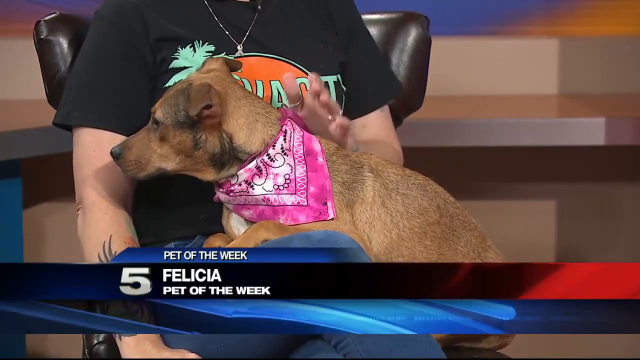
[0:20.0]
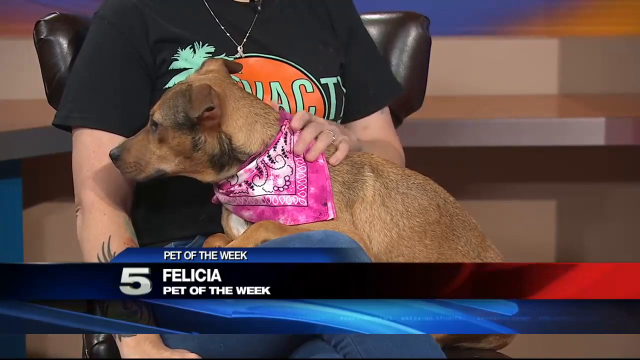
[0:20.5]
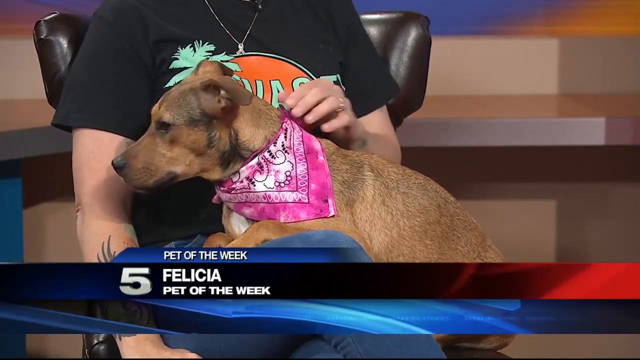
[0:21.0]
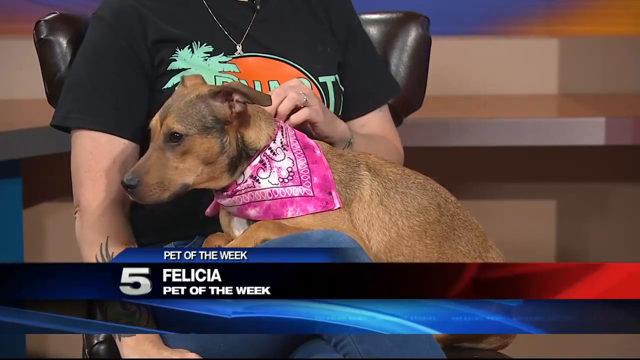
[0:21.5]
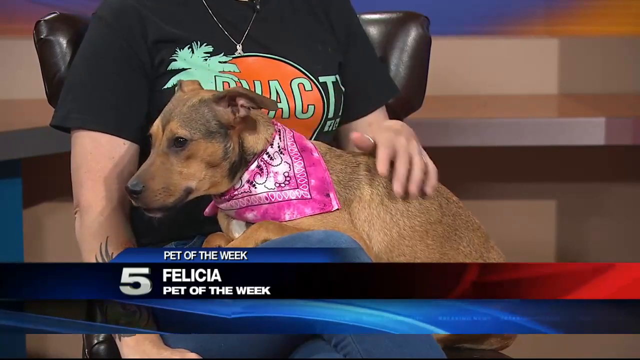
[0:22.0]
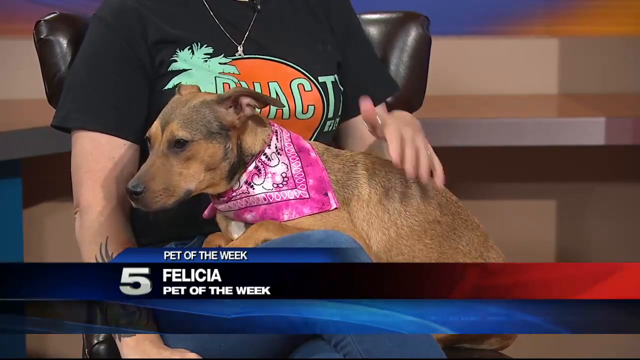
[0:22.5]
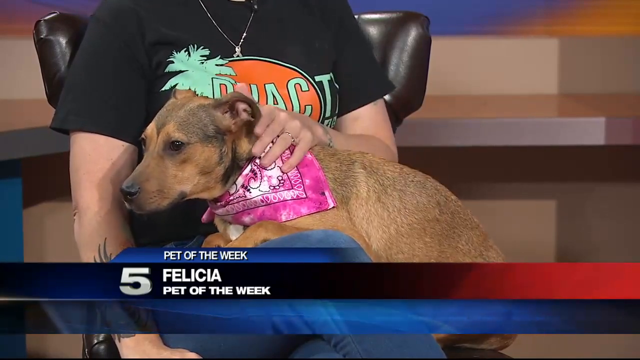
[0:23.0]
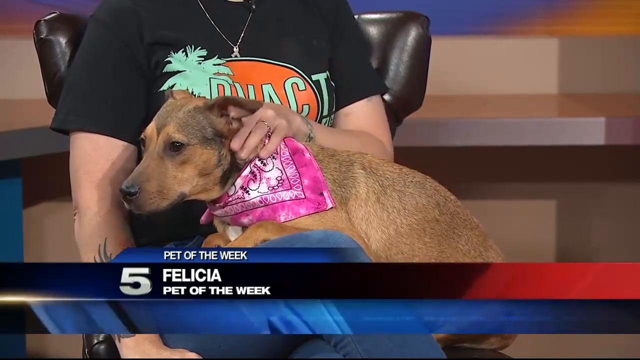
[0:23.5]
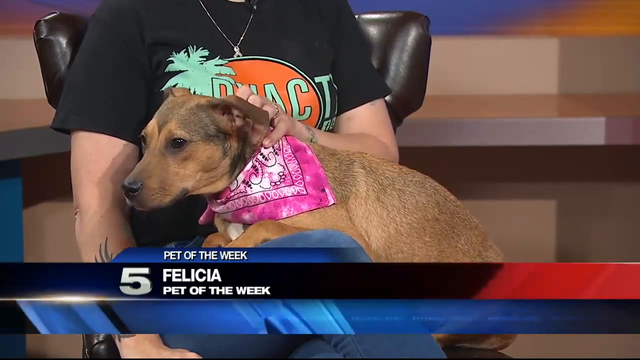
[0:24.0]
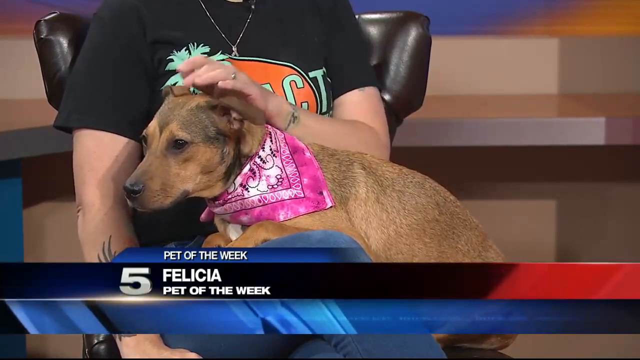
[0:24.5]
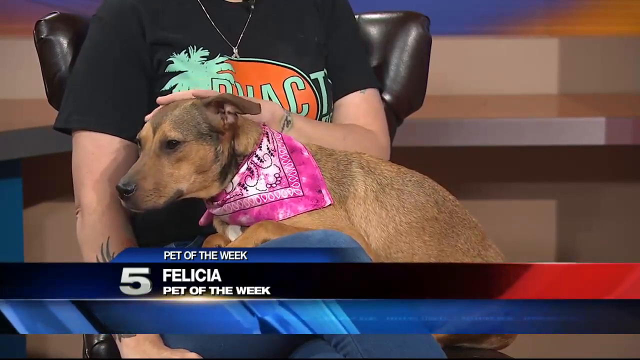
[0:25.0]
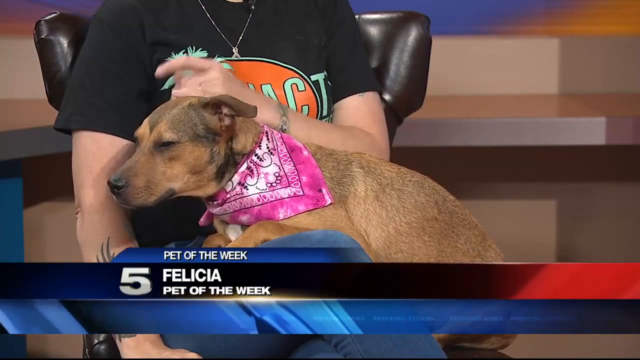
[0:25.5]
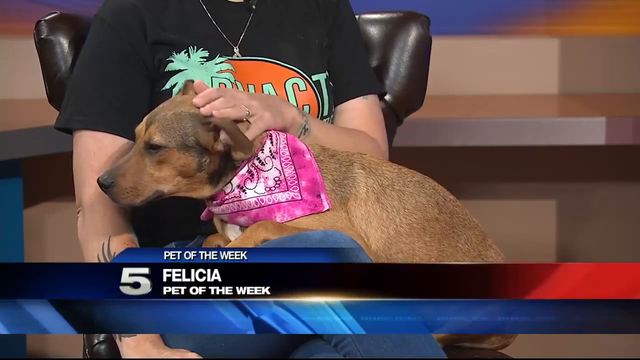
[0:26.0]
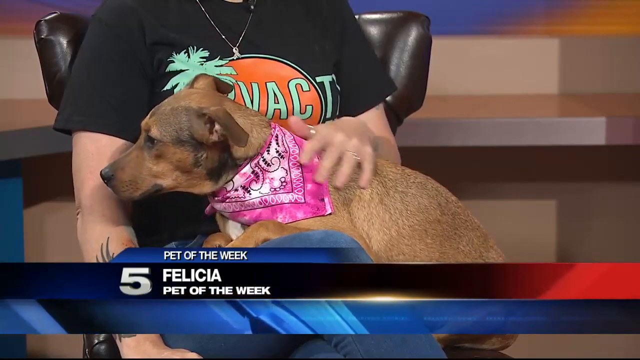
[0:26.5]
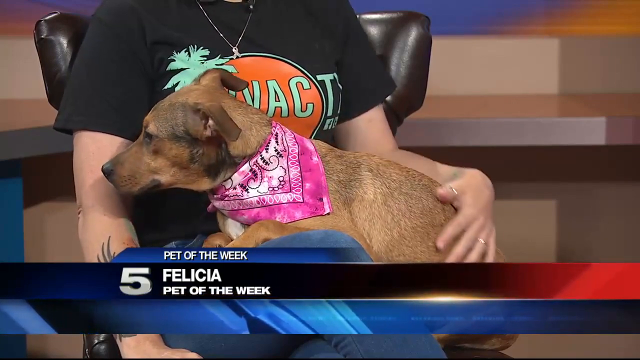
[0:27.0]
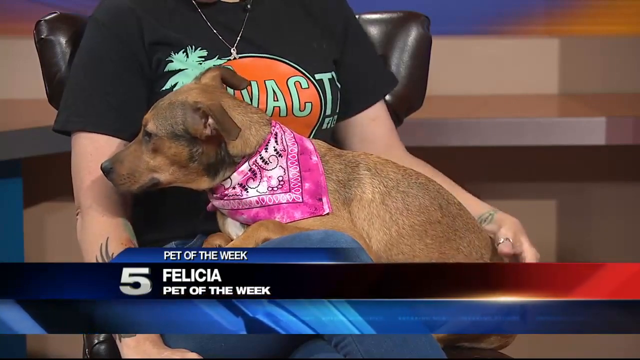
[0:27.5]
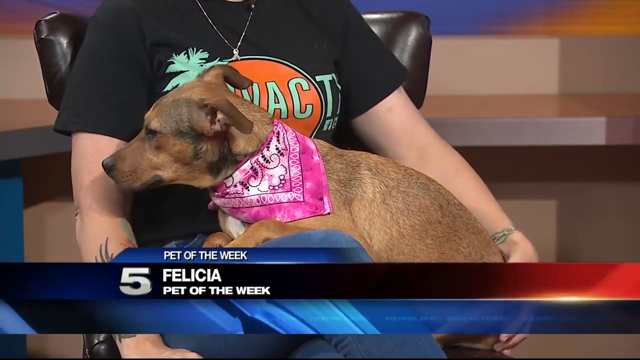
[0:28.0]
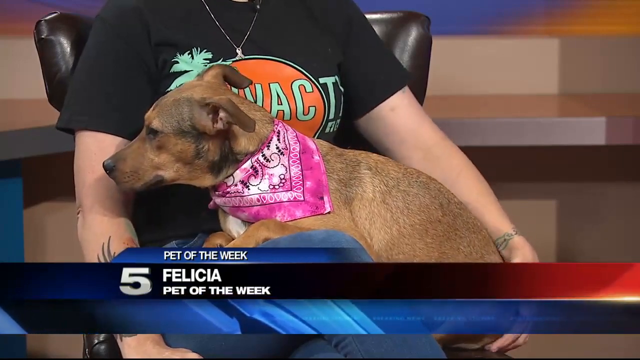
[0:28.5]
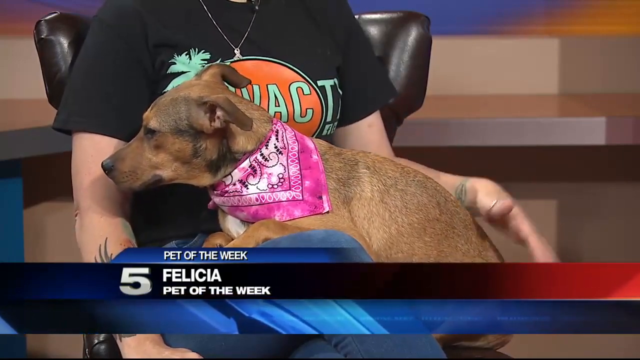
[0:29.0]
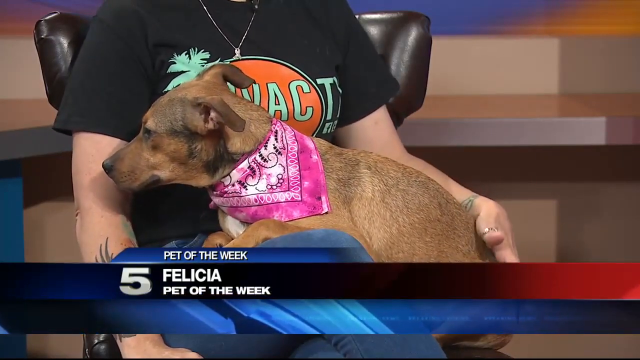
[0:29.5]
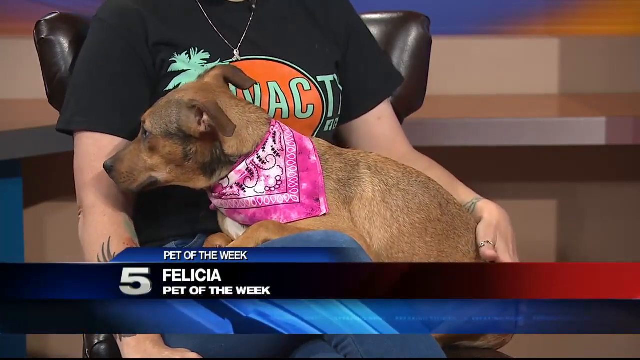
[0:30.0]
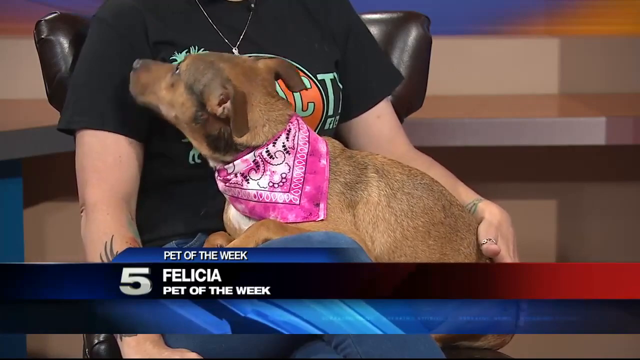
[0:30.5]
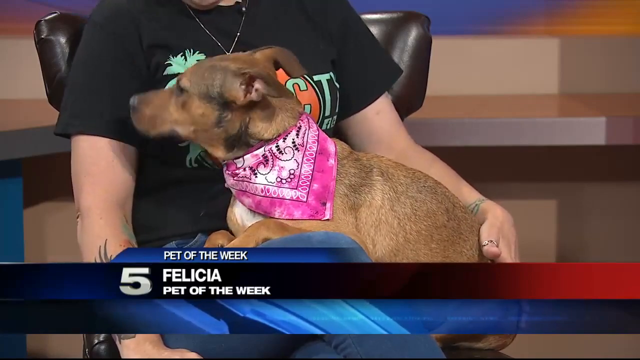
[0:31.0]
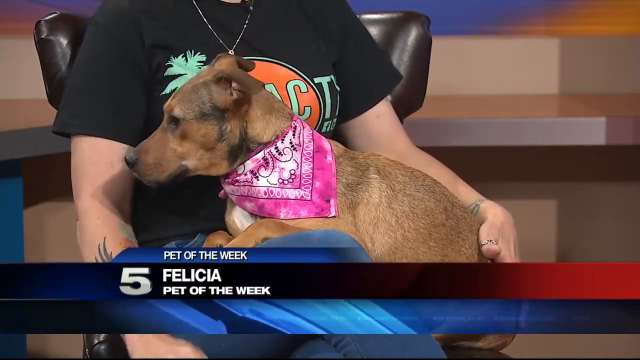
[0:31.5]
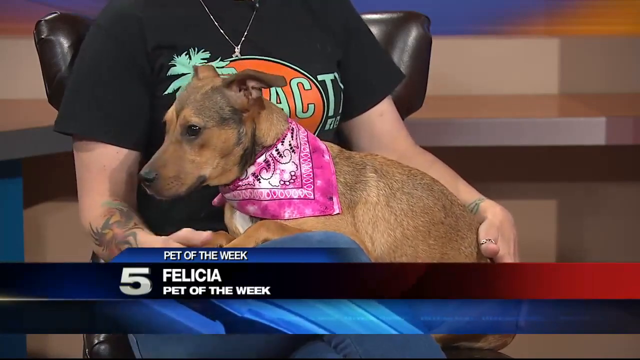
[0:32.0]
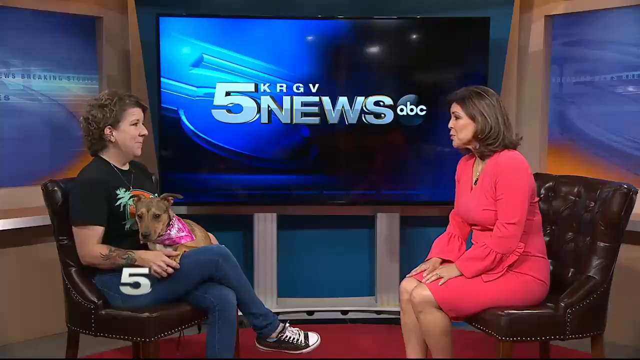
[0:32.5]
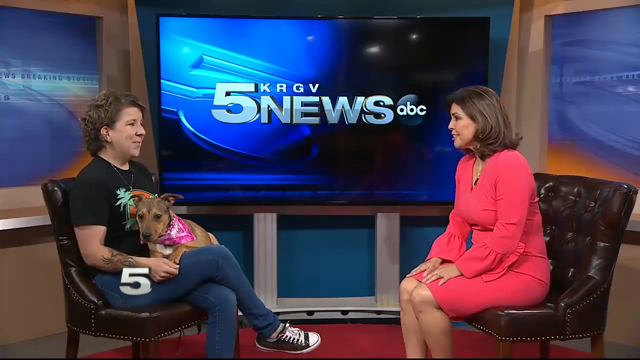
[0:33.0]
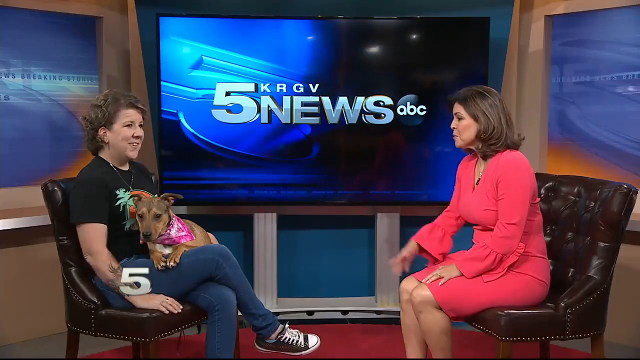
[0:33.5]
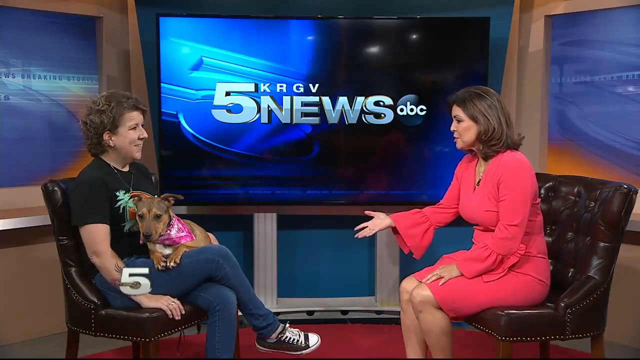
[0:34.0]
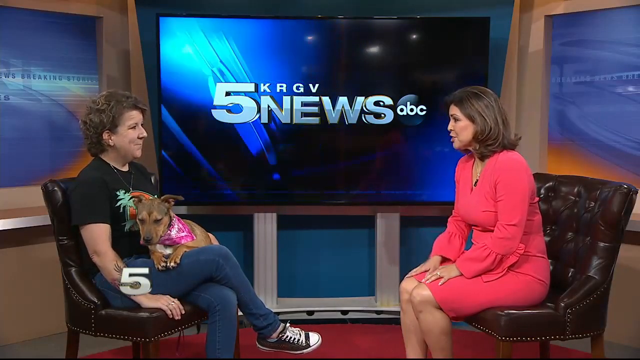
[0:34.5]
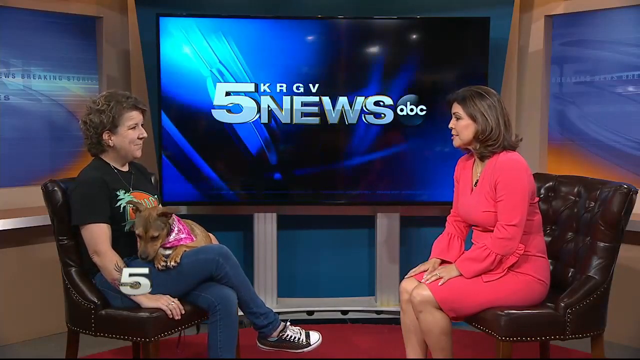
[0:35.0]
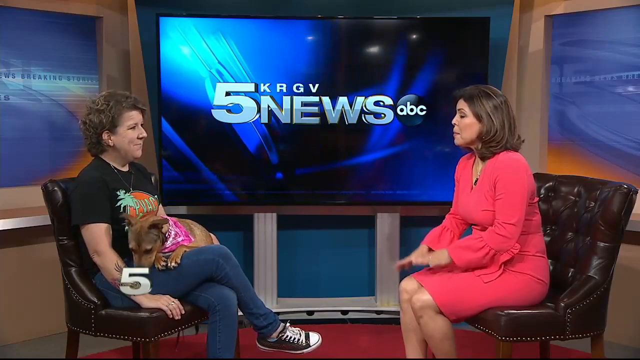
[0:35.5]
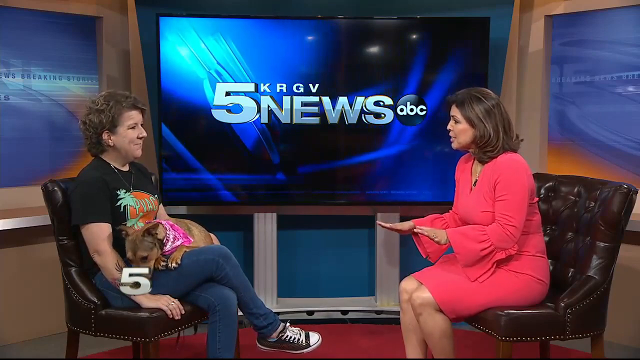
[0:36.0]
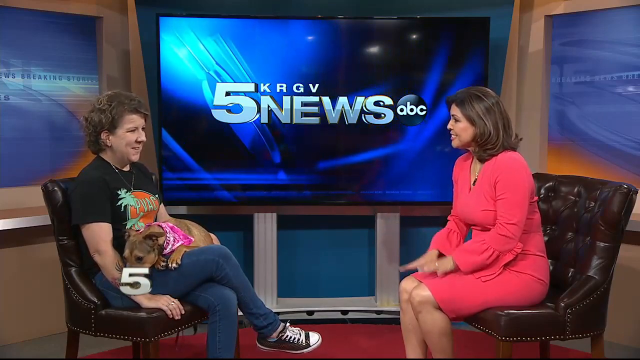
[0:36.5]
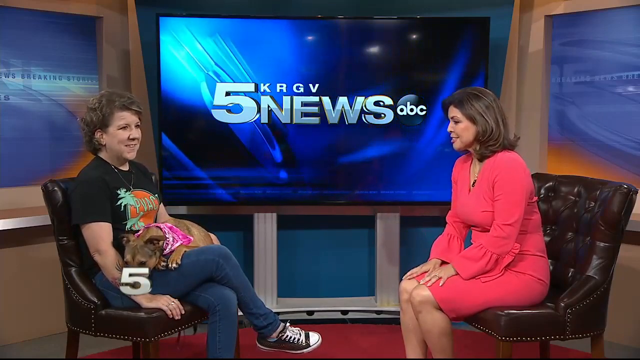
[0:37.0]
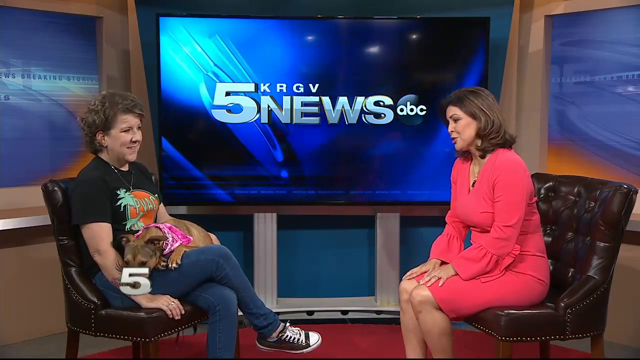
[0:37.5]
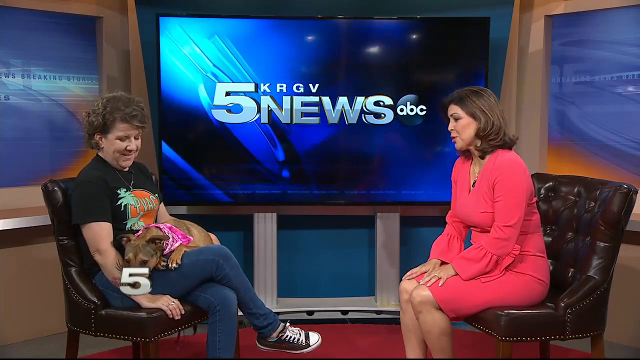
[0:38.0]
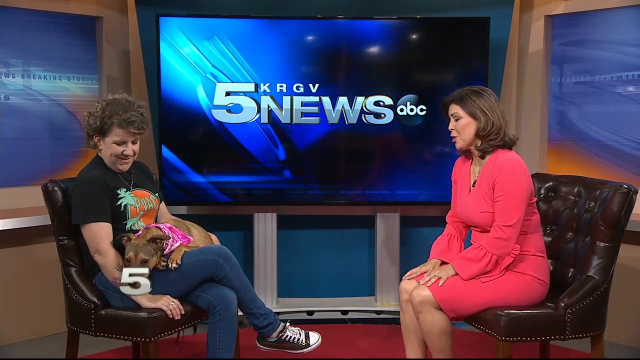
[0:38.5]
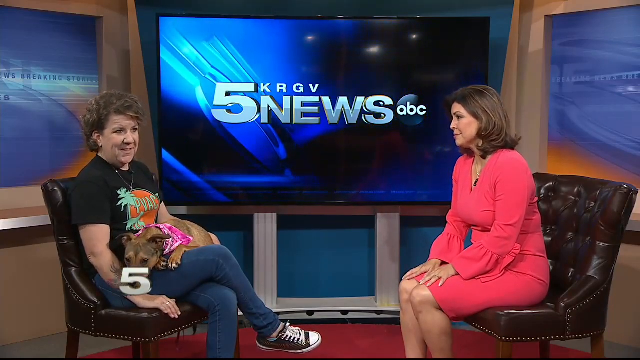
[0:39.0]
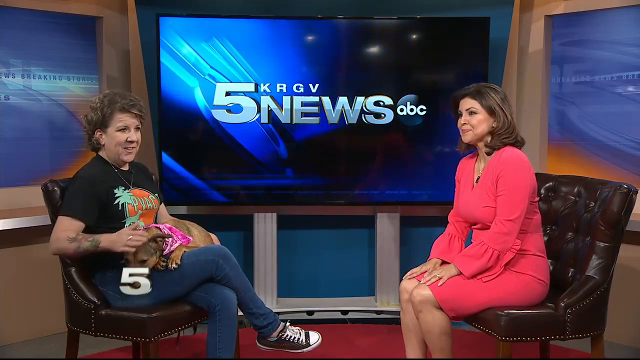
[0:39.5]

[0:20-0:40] The woman continues to pet the dog. With her left hand she strokes along the dog's neck, slowly up toward the head, back down to the neck, and down to the bottom where the tail is. With her right hand she holds the dog's paws, and the dog begins to sniff her right hand and wrist. The news anchor gestures with both hands as she talks. The woman on the left keeps petting the dog on the head. The dog looks at its owner and then back at the crowd; it is not barking. The dog bows its head down onto the woman's lap or thigh and lays there while the owner pets it.